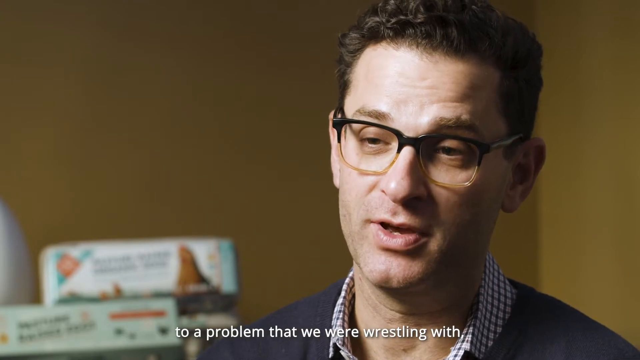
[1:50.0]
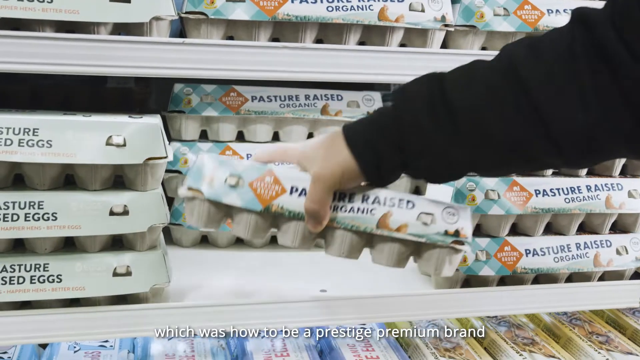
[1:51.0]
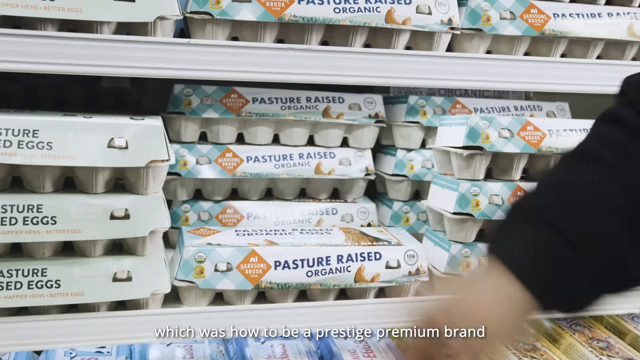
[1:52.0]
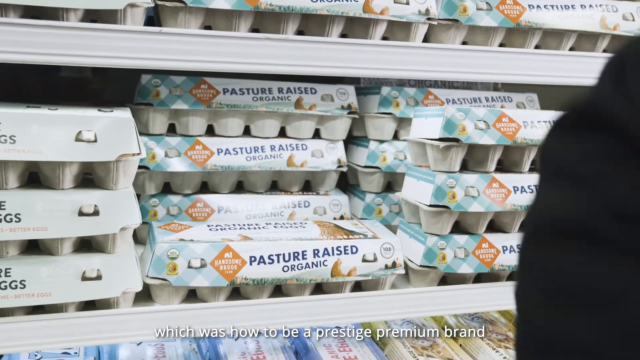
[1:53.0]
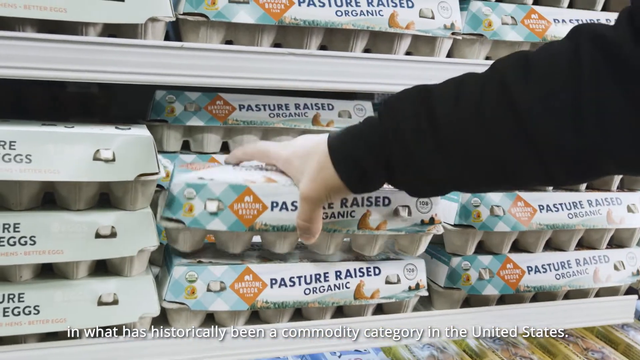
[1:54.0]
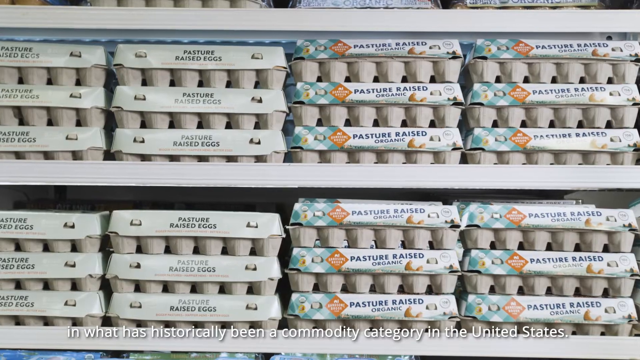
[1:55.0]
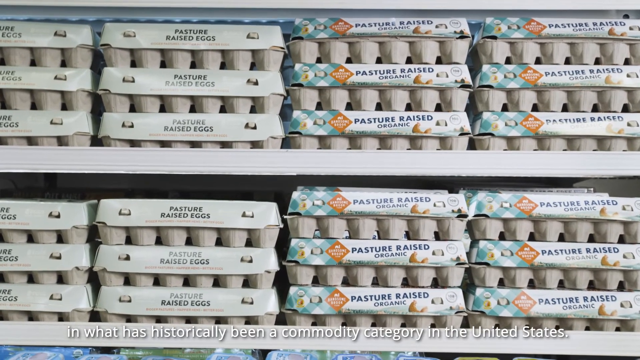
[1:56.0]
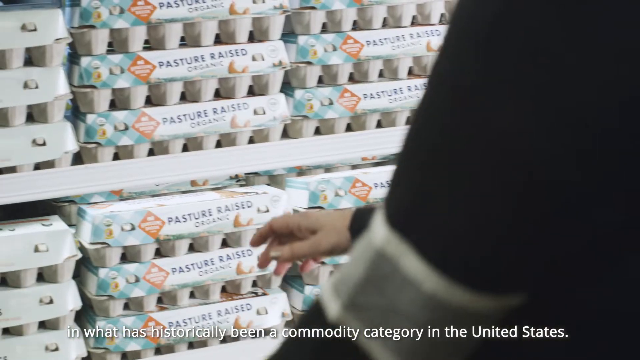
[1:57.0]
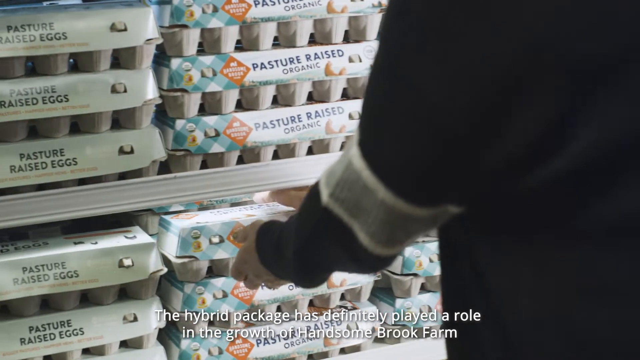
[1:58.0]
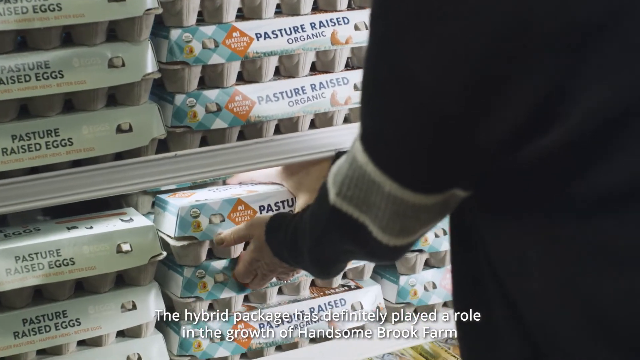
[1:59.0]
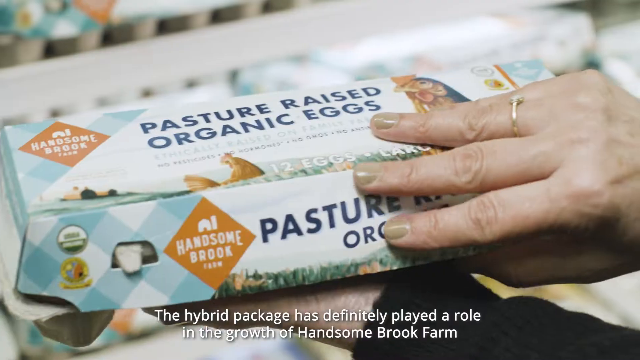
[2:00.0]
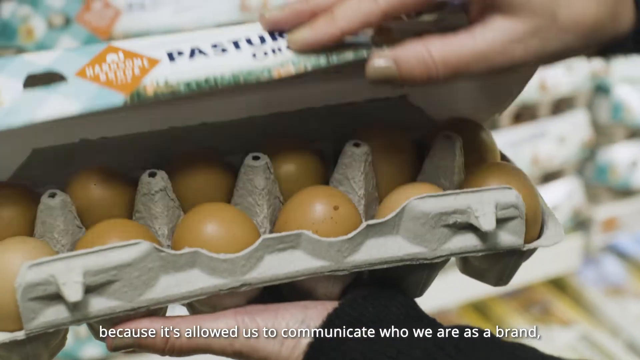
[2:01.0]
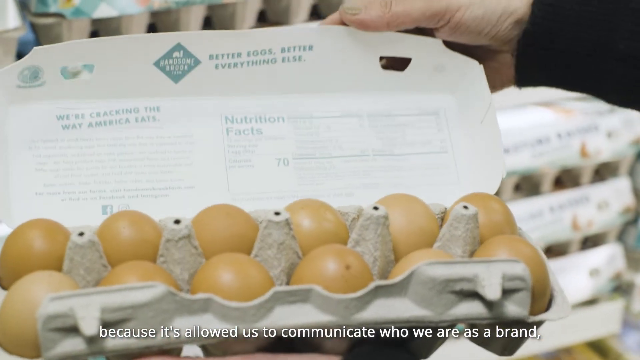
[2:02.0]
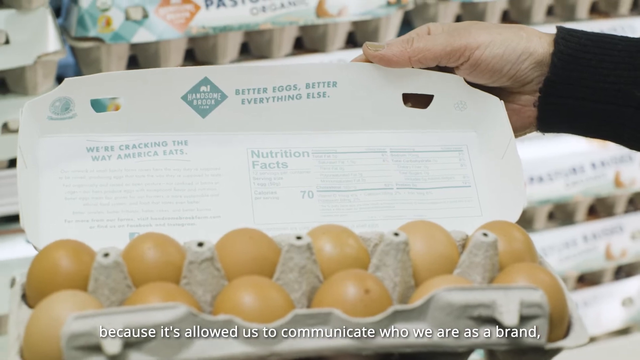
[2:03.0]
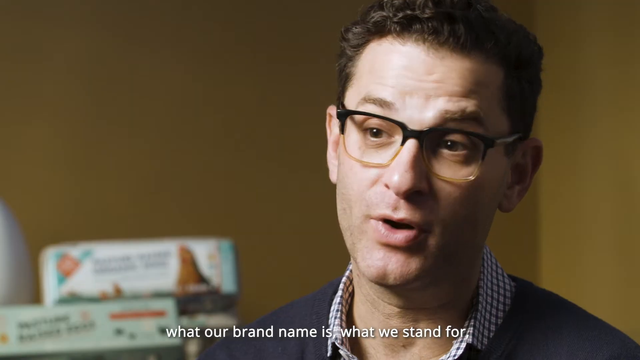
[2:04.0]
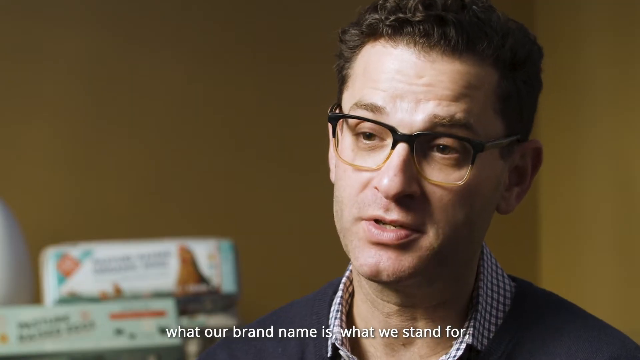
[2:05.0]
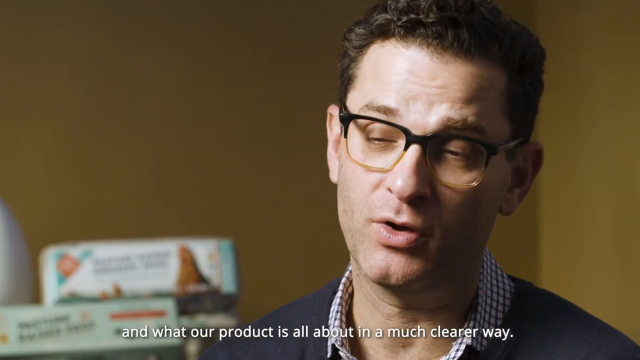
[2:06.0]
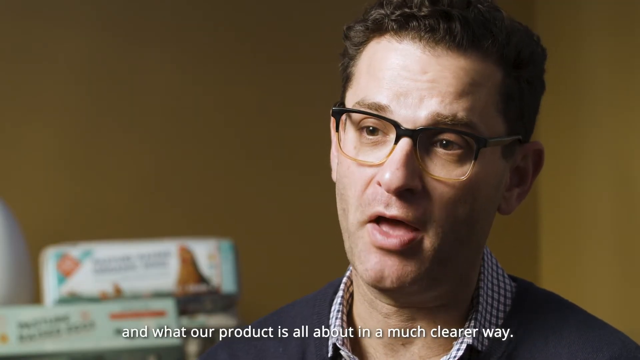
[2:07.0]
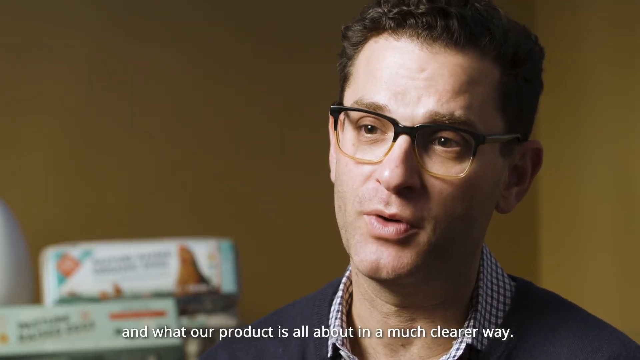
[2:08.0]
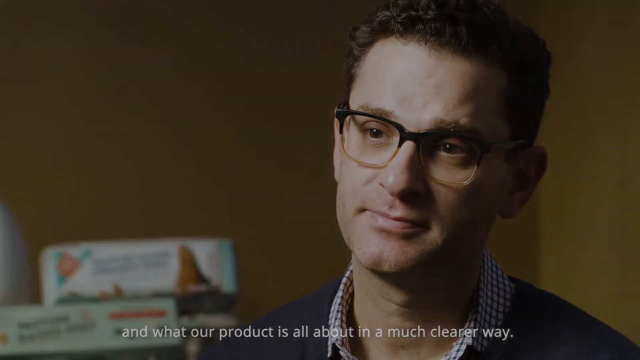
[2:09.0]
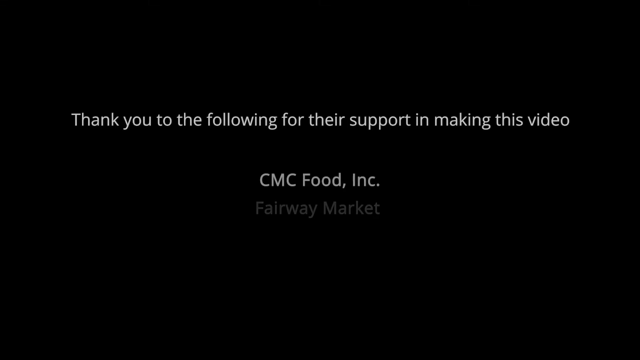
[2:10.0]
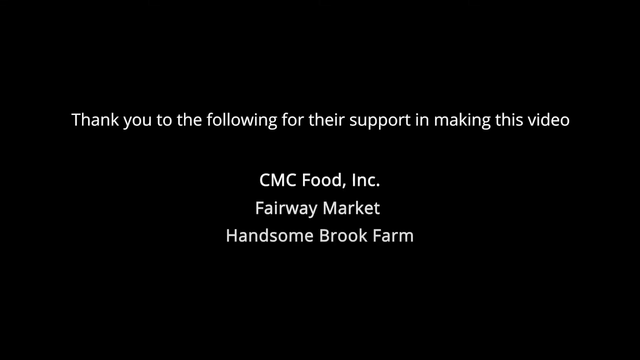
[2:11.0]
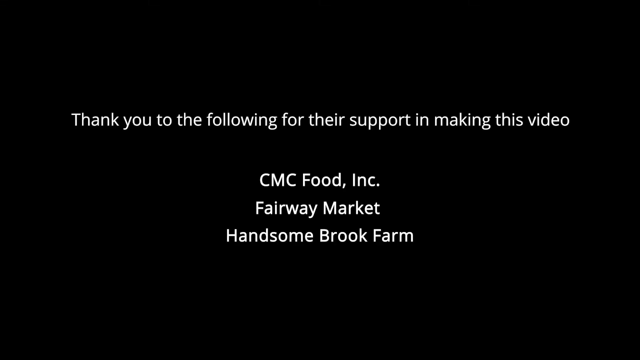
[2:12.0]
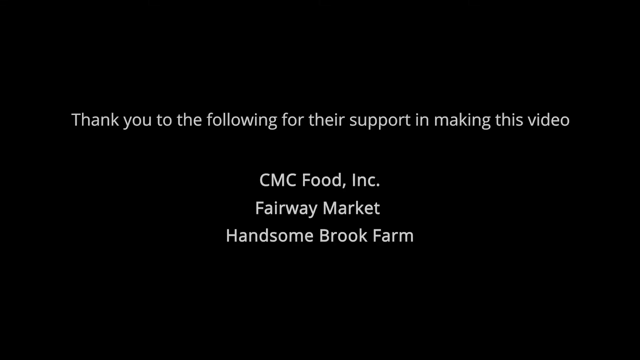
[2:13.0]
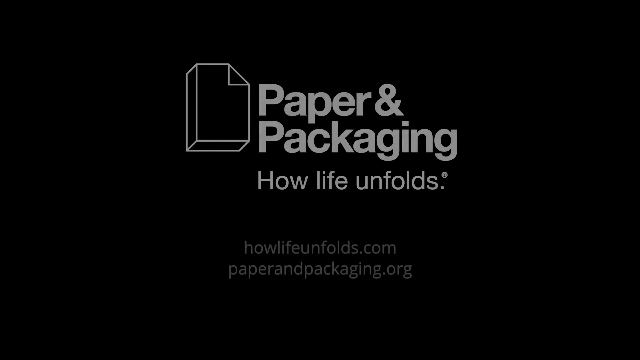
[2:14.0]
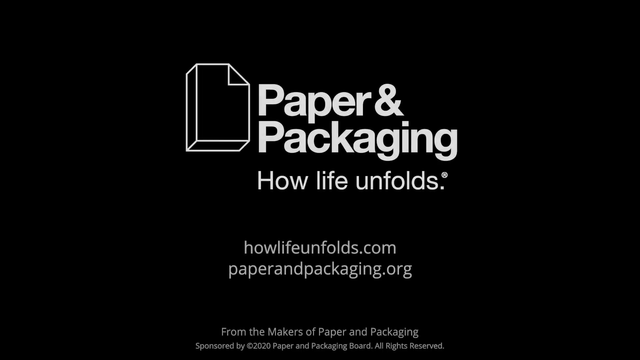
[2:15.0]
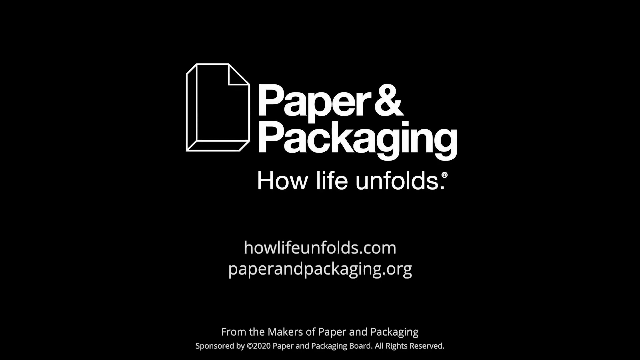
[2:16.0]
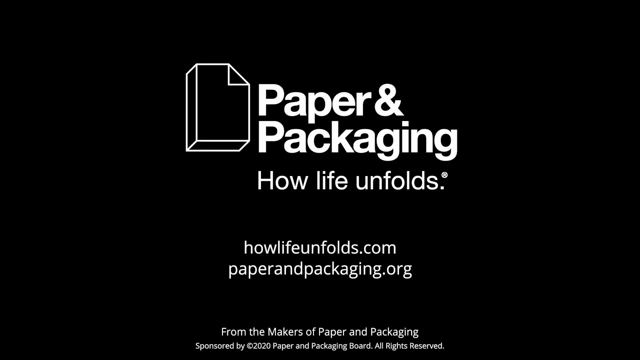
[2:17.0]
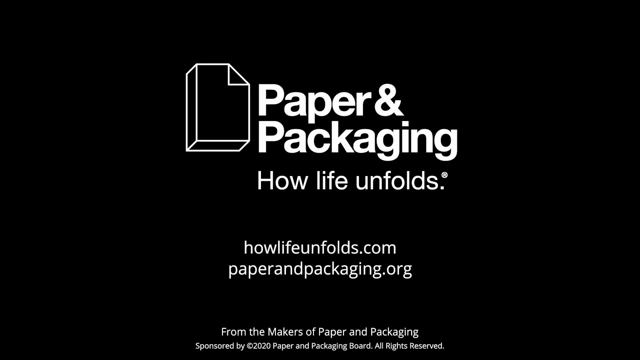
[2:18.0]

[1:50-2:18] Captions read: "which was how to be a prestige premium brand. in what has historically been commodity category in the United States. The hybrid package has definitely played a role in the growth of Handsome Brook Farm. because it's allowed us to communicate who we are as a brand. what our brand name is, what we stand for, and what our product is all about in a much clearer way." Someone loads lots of boxes of eggs onto the shelves in the store. After a close-up of the eggs, a customer reaches for and grabs a box, then opens it and shows the inside of the box and the eggs to the camera. The video returns to the interviewee, then fades to black, and a white caption over the black screen says "thank you to the following for their support in making this video. CMC Food Inc. Fairway Market Handsome Brook Farm". These captions fade and a logo for the company paper and packaging appears, with a box or a pile of papers next to it drawn as a simple white outline. The tagline is "How Life Unfolds," and underneath are two URLs: "howlifeunfolds.com" and "paperandpackaging.org".